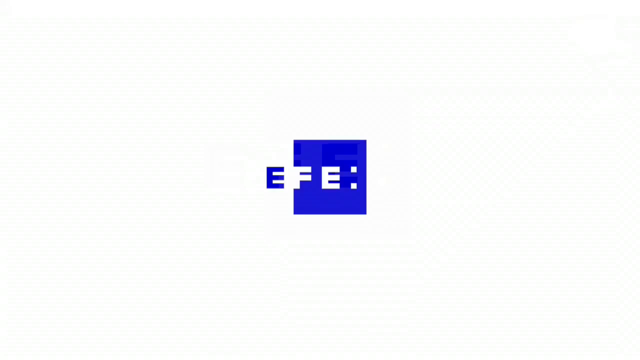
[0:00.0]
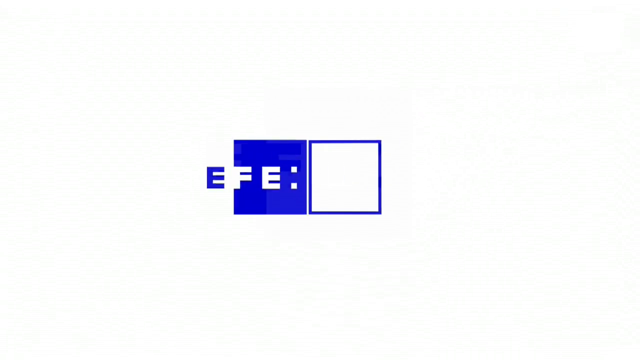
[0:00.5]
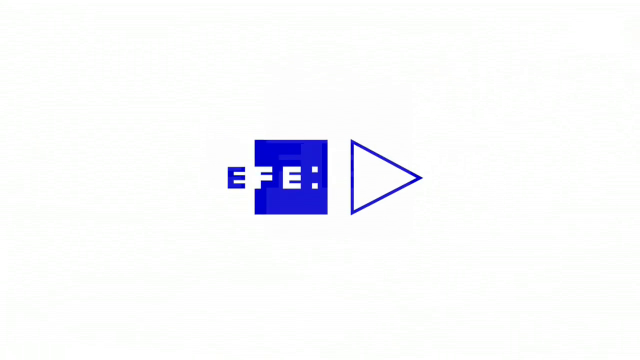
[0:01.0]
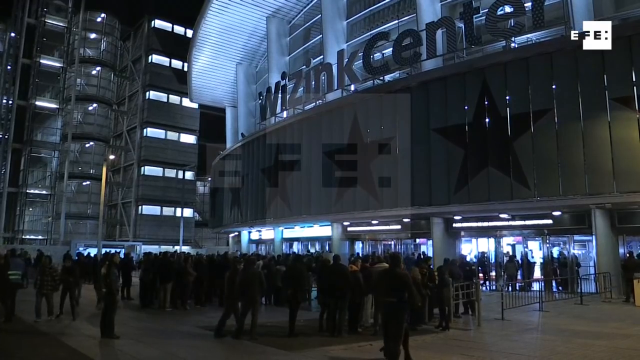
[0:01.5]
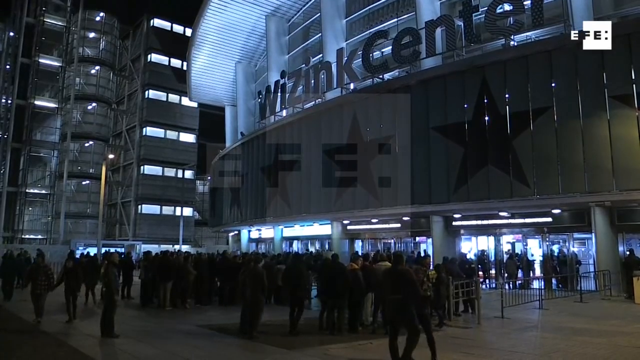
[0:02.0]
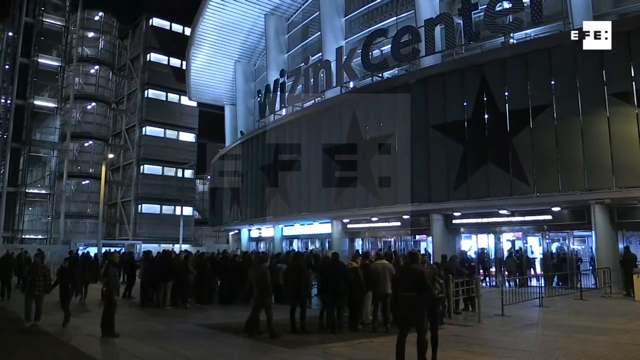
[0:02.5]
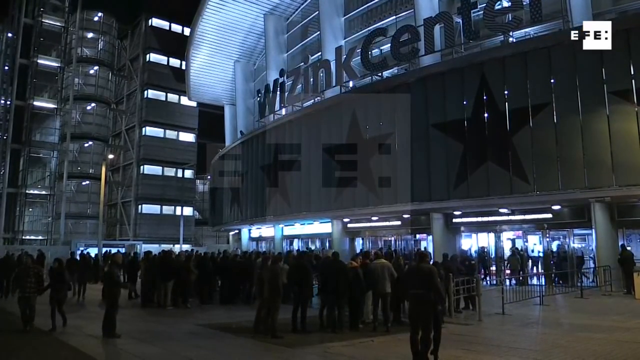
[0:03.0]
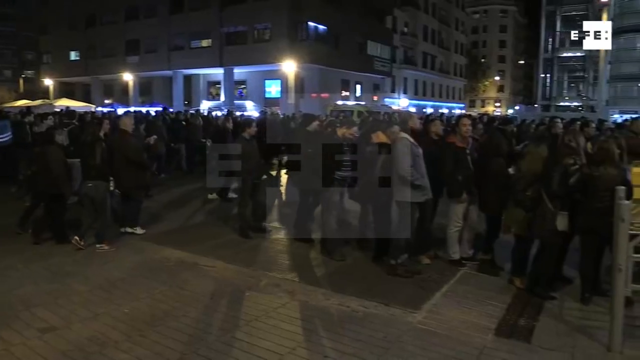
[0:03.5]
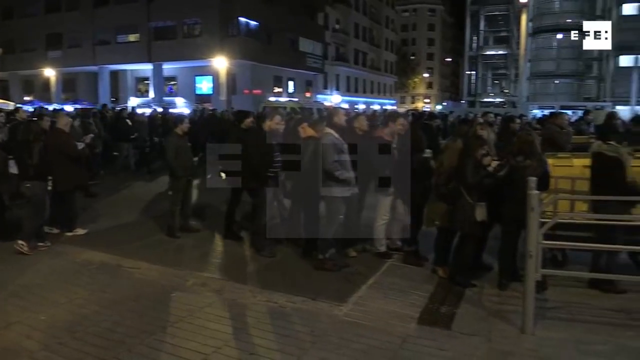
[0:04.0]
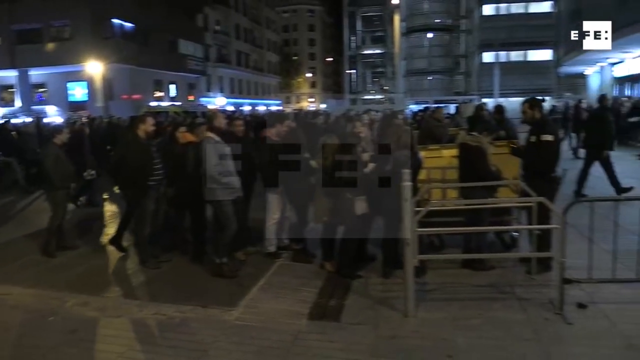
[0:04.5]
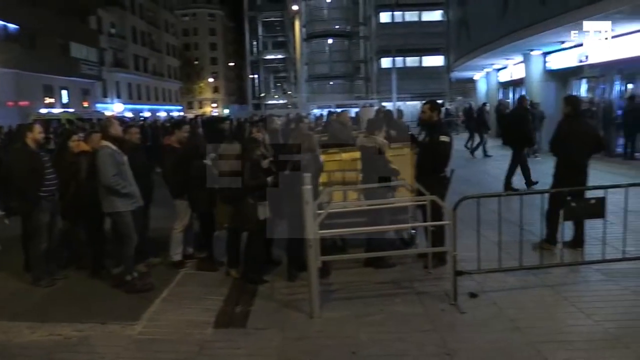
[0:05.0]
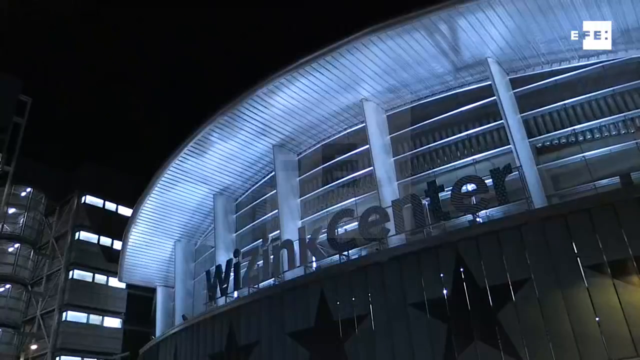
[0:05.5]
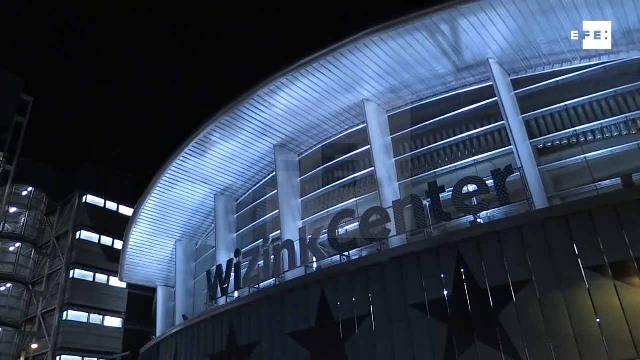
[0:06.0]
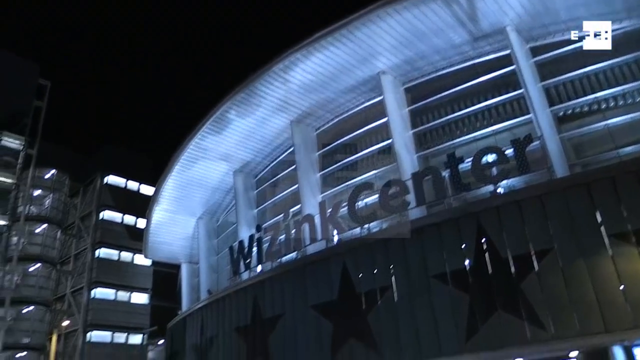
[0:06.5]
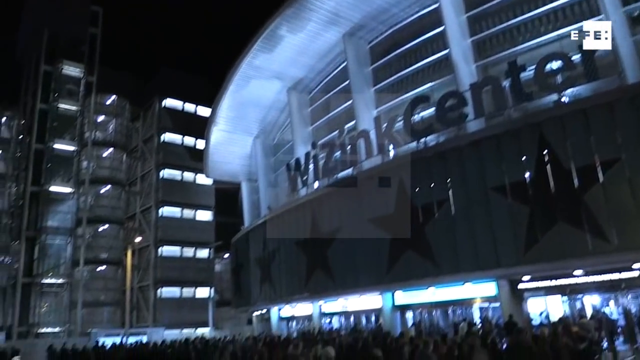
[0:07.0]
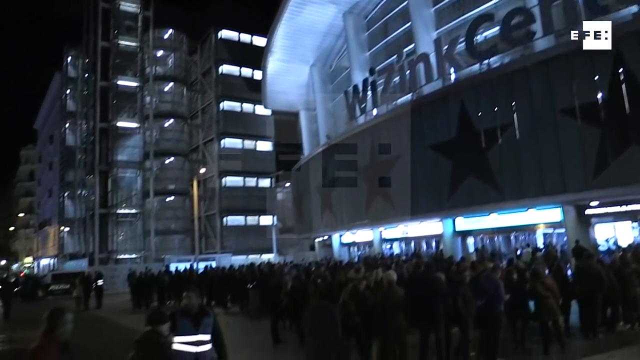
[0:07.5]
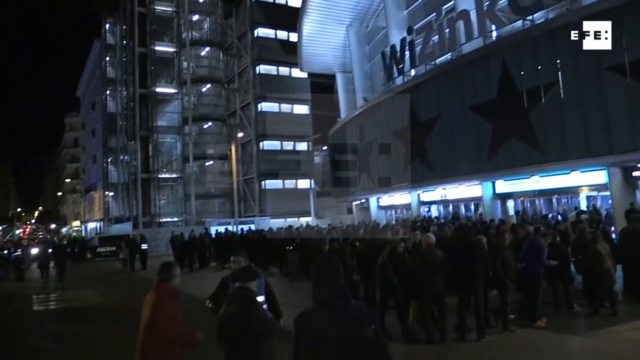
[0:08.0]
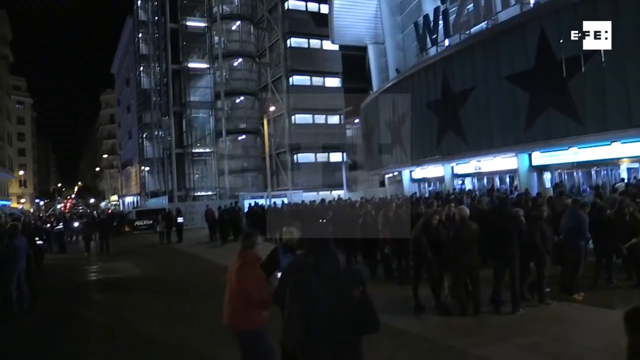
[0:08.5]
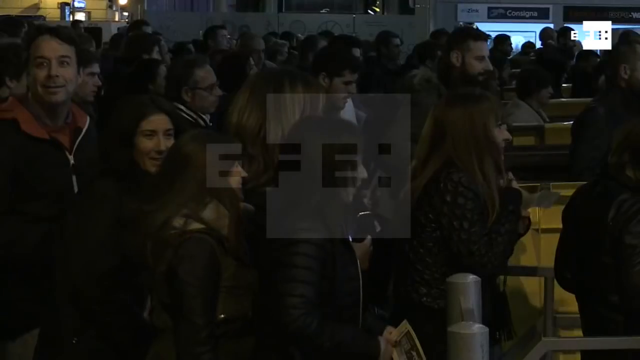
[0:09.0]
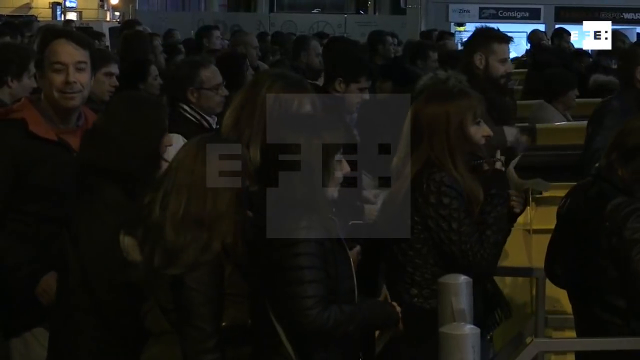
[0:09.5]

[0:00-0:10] The screen is white, and then a blue square appears in the middle of it. A blue letter E is written to the left of the square, and the letters F and E are written in white in the middle of the blue square. The video then cuts to outdoor footage shot at night of the front of a large, rounded stadium that looks white from the outside. Along the top of the front of the stadium it says "Wazink Center". On the ground in front of the stadium, thousands of people are lined up. Tall buildings are all around the stadium on the left and right sides, and there are people everywhere.